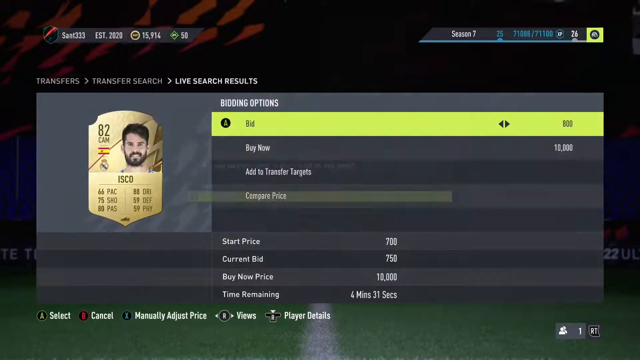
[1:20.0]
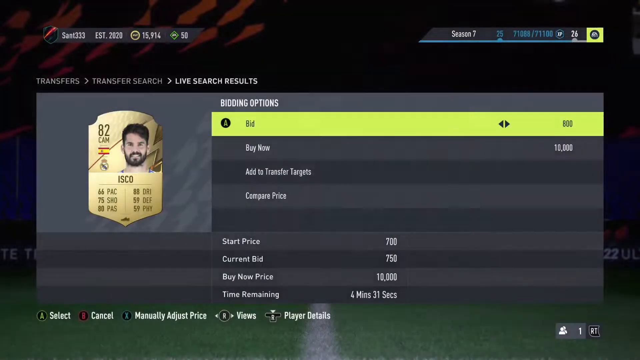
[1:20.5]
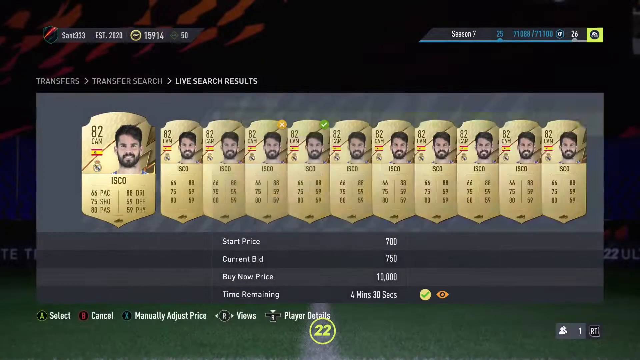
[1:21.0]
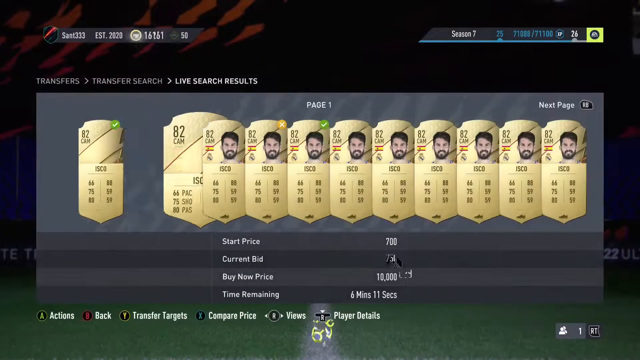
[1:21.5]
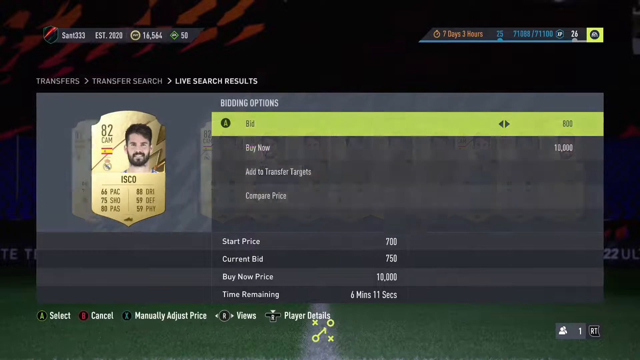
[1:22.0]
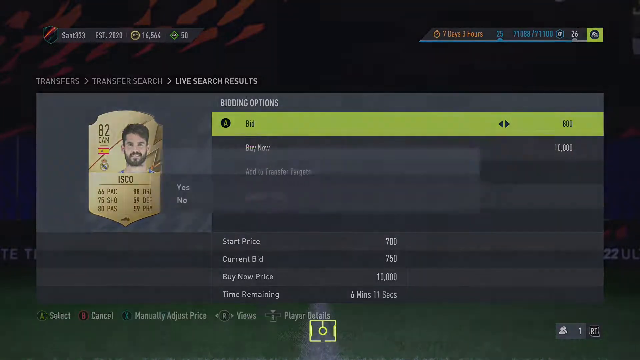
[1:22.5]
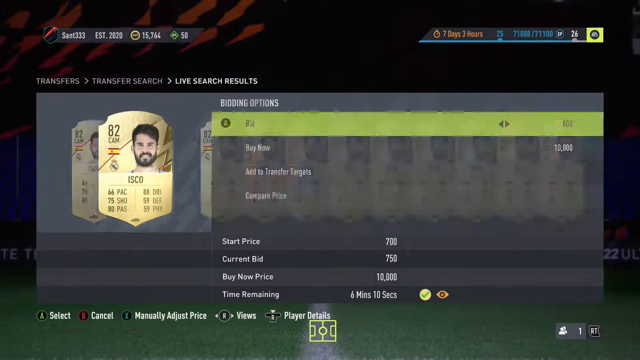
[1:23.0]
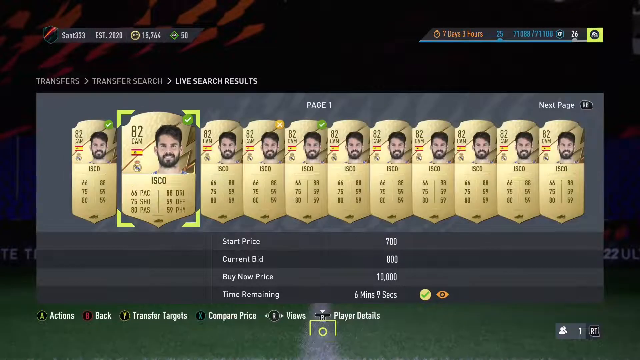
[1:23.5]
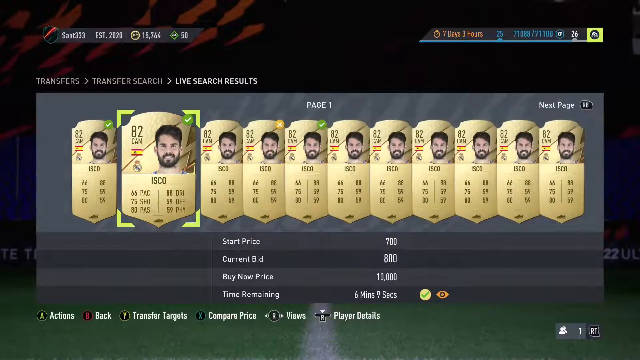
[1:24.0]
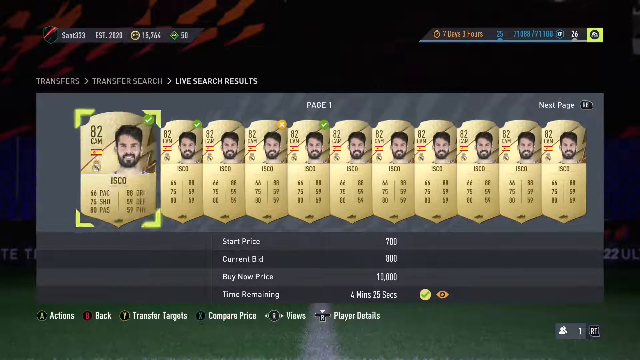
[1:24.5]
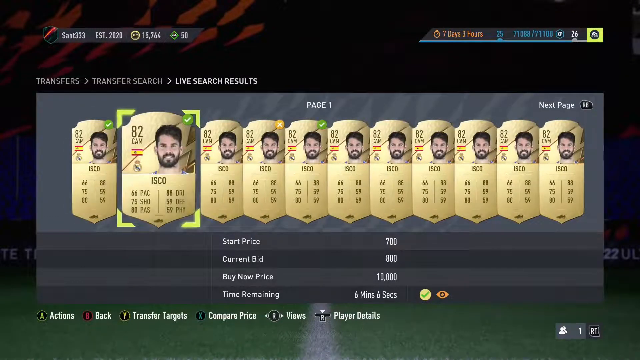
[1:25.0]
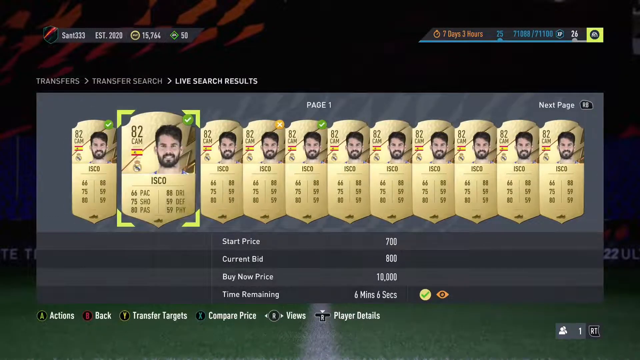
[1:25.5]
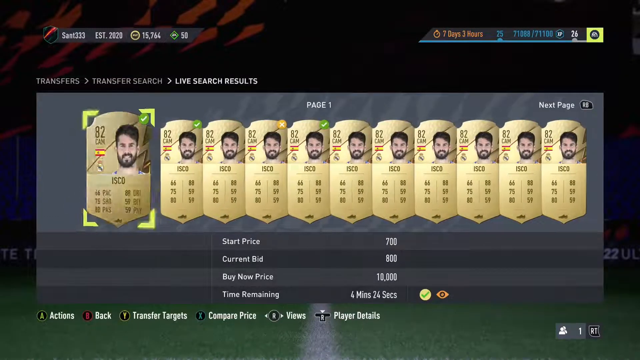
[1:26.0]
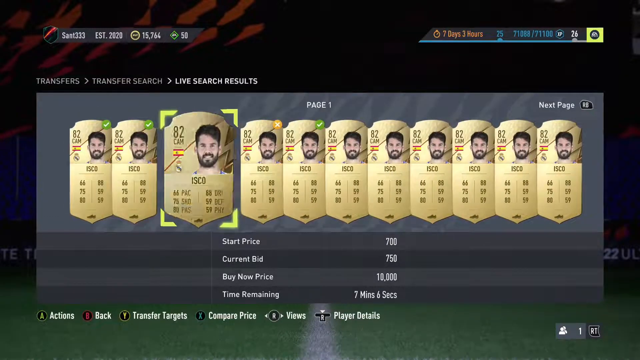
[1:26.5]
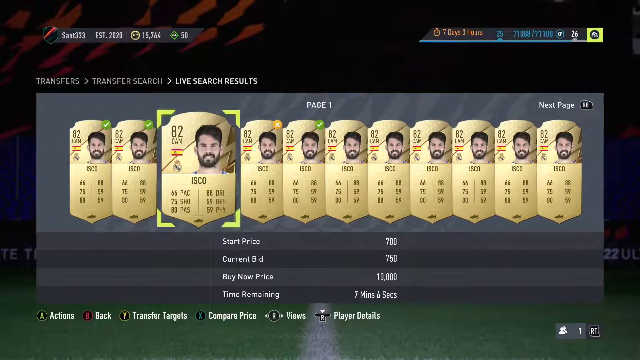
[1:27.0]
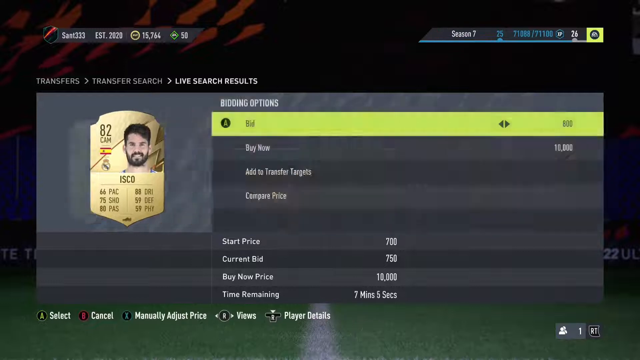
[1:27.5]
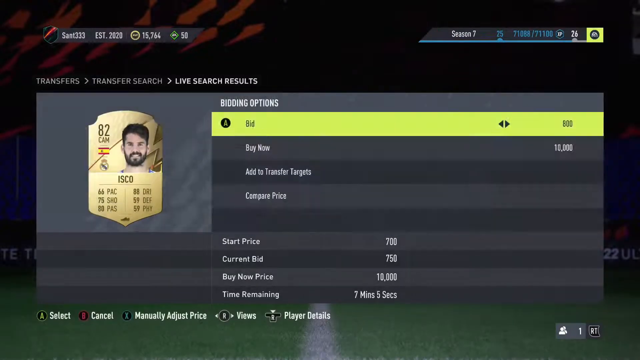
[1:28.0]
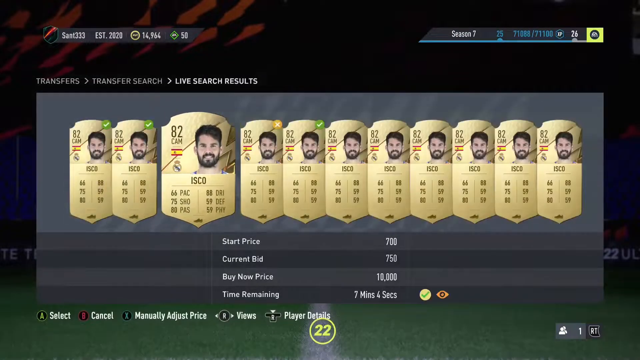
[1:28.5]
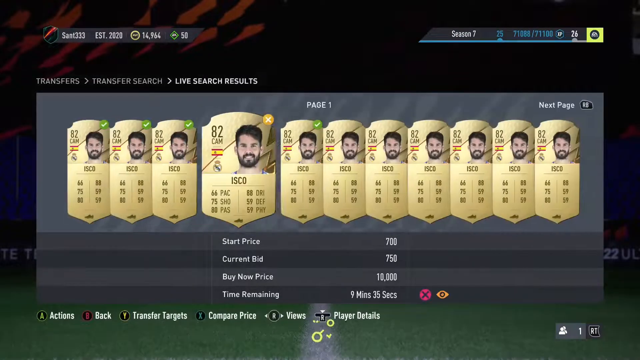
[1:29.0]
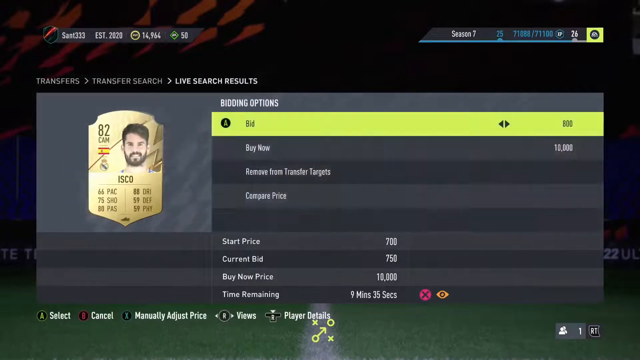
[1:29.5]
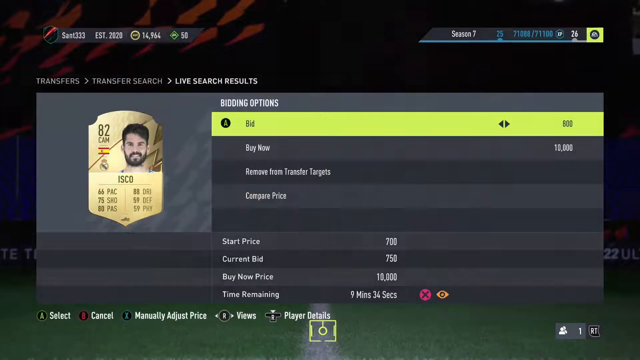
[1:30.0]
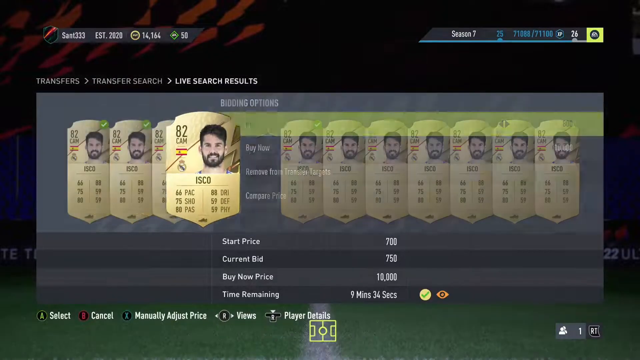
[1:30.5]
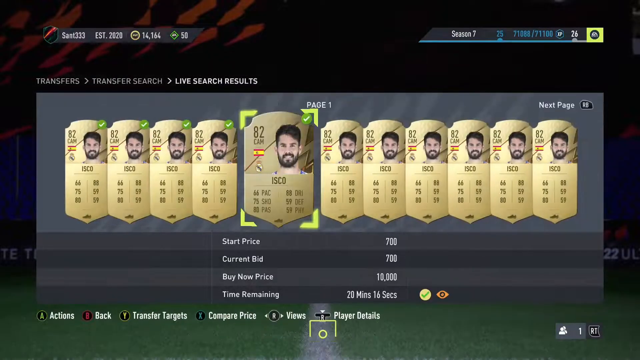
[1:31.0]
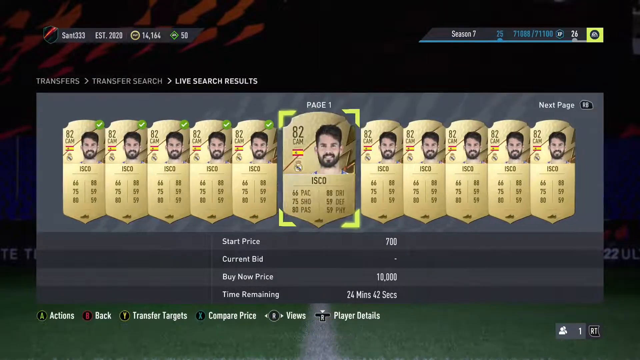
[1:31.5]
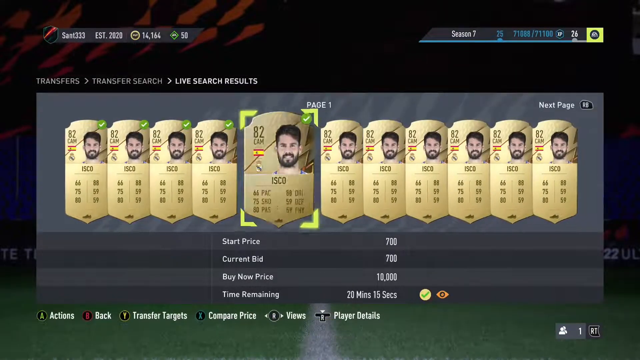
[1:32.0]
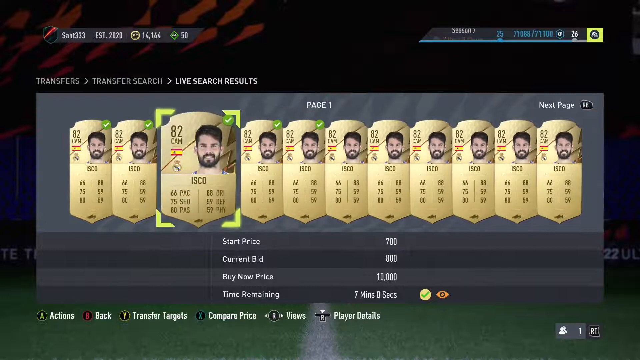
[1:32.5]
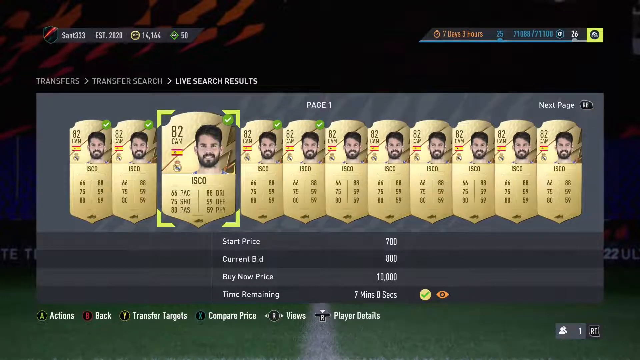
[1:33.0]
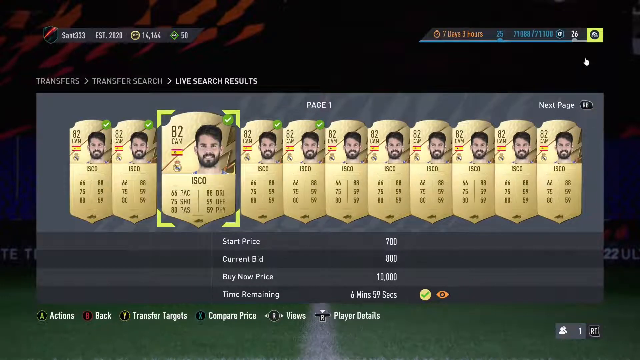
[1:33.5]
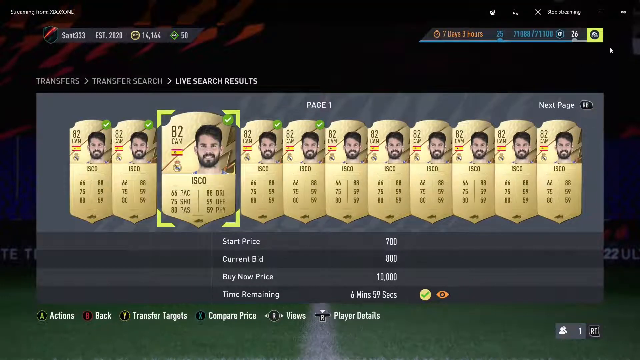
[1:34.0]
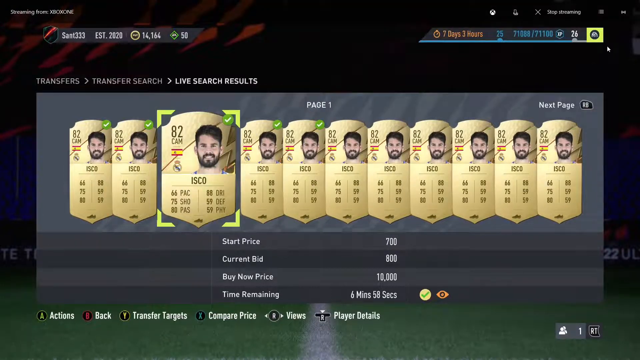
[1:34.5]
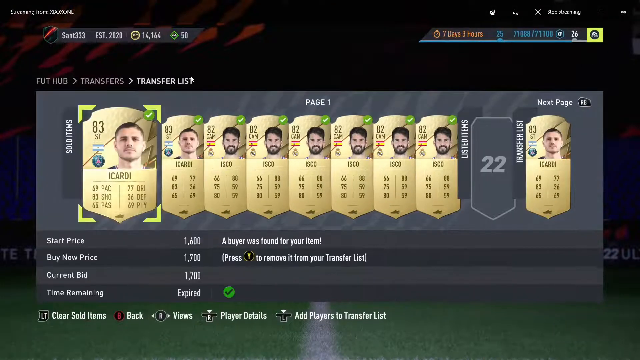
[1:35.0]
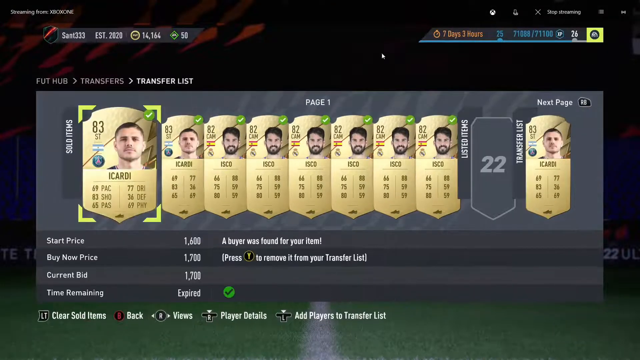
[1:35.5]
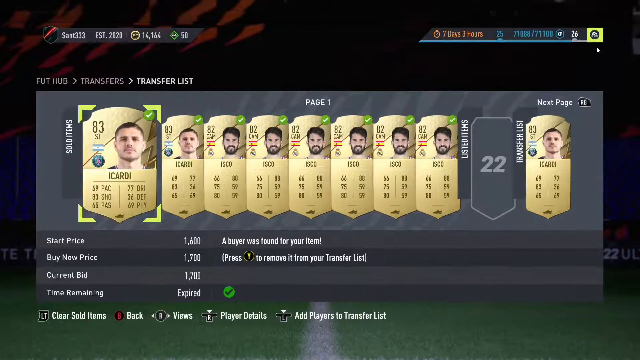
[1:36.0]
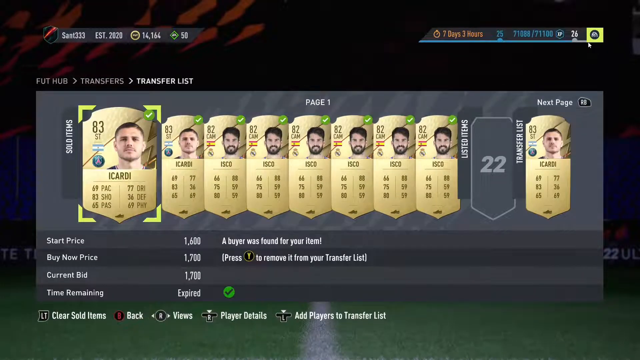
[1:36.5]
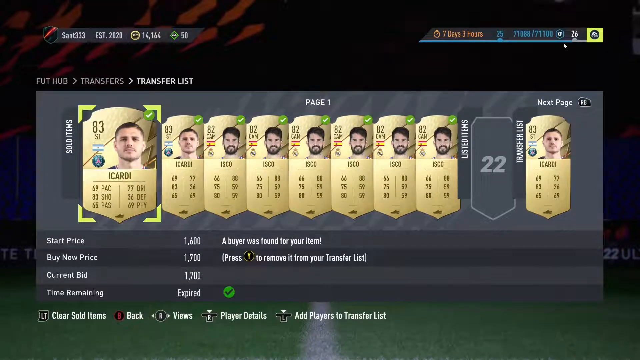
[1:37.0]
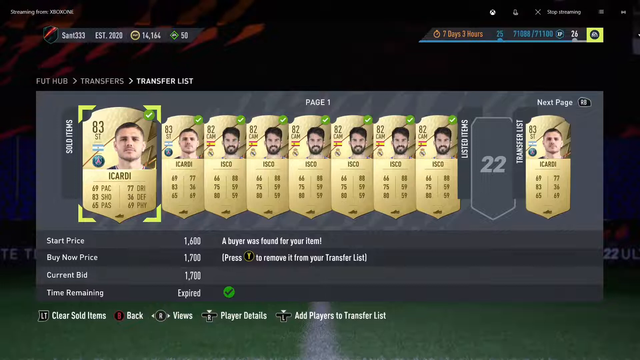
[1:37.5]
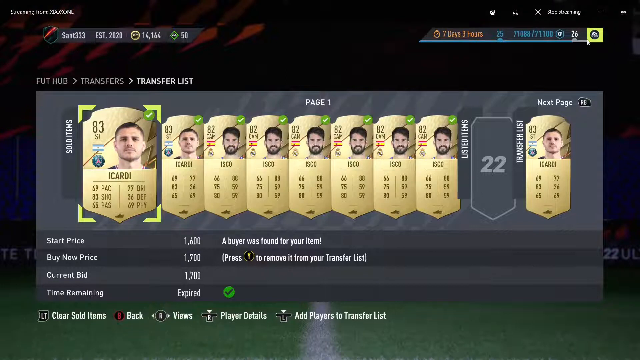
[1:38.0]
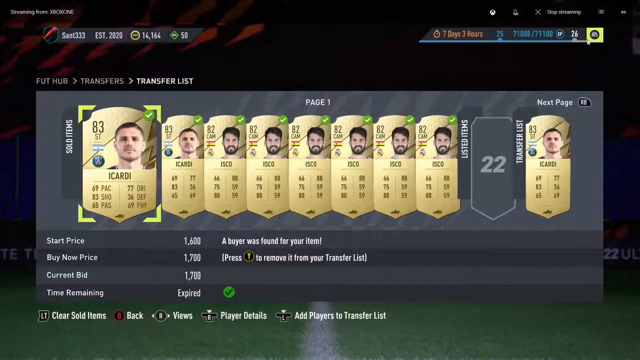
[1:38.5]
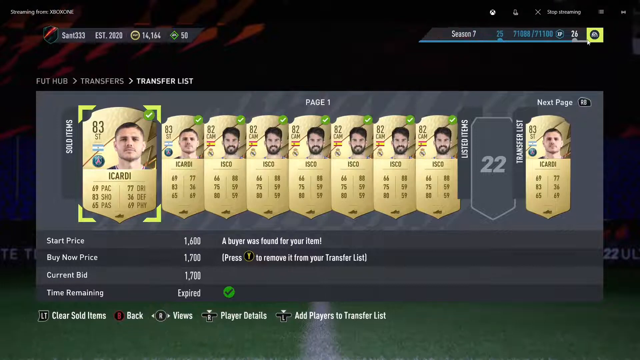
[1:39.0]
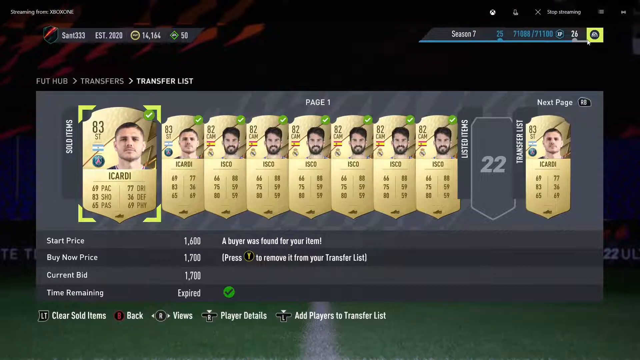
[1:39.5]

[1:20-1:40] The Isco cards are gone through one by one, with a bid placed on each. Scrolling to the right reveals a new card with a different player's portrait, a player named Icardi. His is also a gold card, but it is rated 83 and shows different stats. Bids appear to have been placed on all of the Isco cards and are now being placed on Icardi. The screen shows page one, and the view seems to move to the next page. Two slots of cards are now shown, listed items and a transfer list, in addition to sold items on the left.